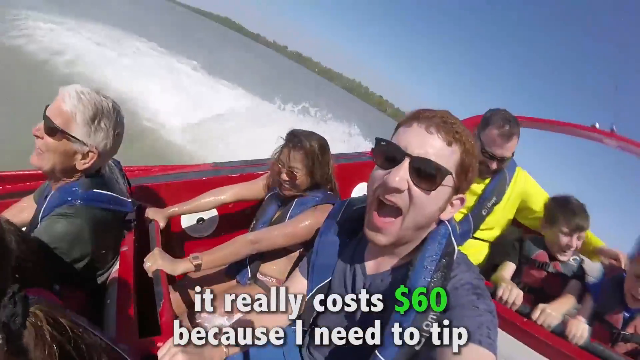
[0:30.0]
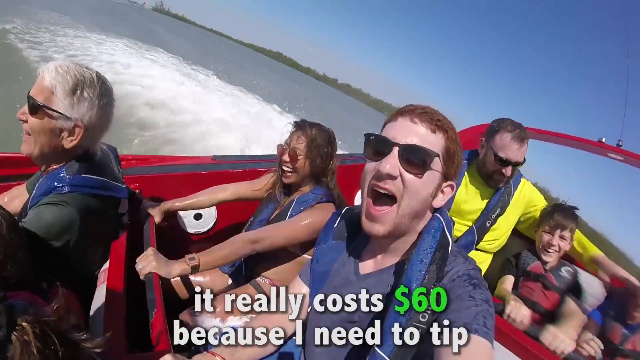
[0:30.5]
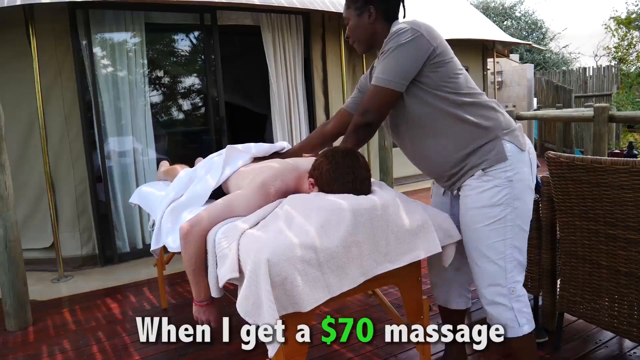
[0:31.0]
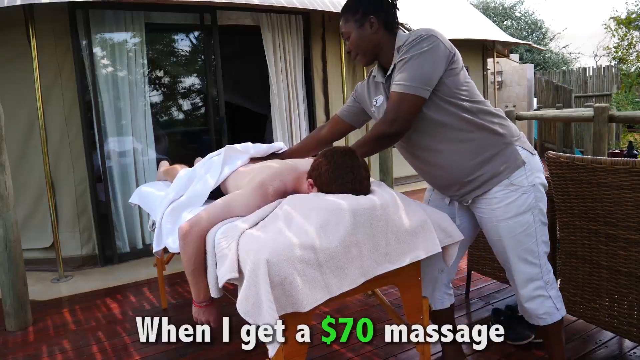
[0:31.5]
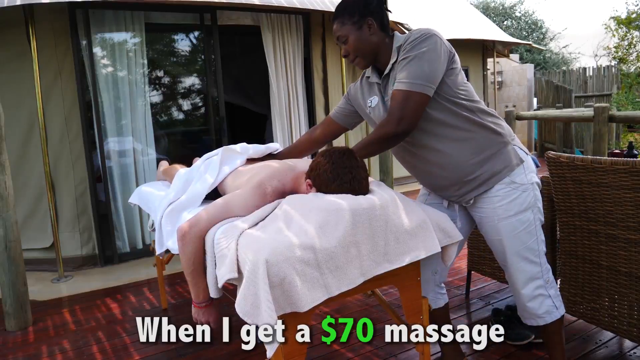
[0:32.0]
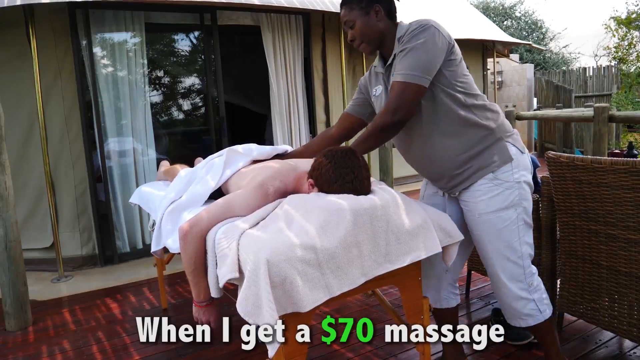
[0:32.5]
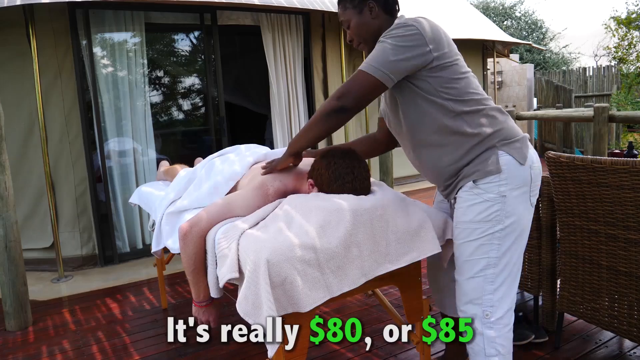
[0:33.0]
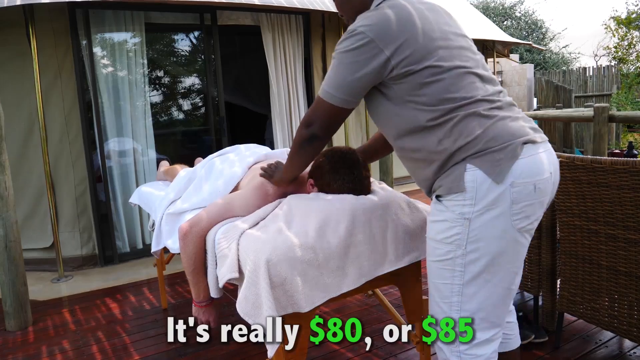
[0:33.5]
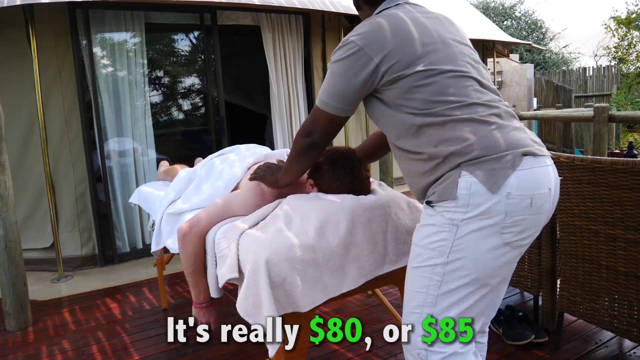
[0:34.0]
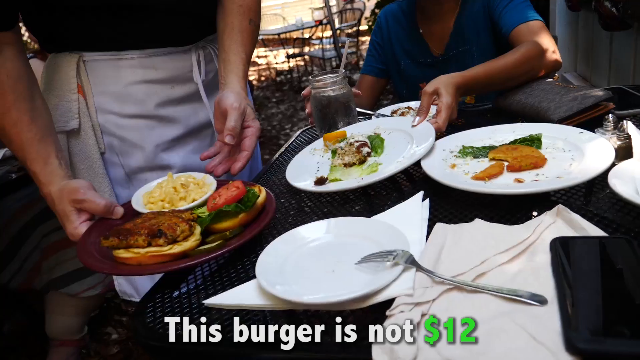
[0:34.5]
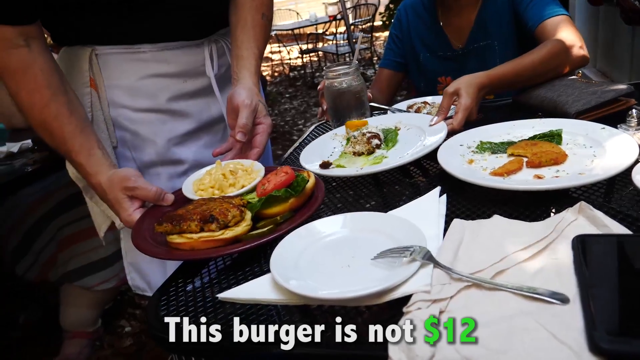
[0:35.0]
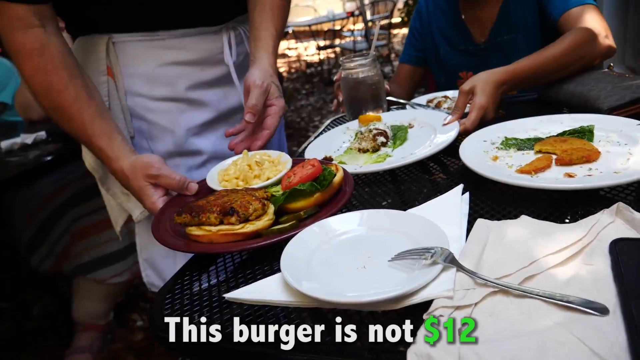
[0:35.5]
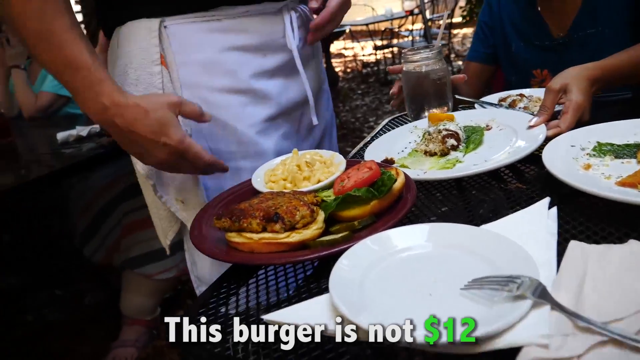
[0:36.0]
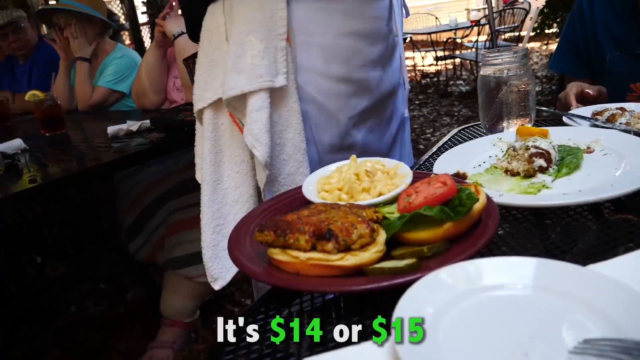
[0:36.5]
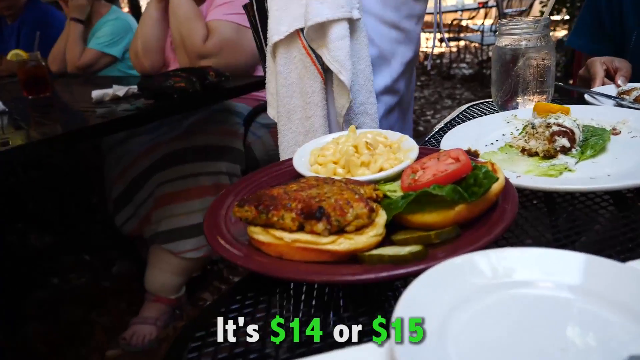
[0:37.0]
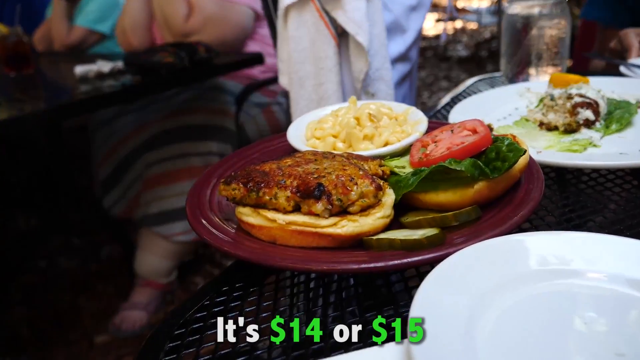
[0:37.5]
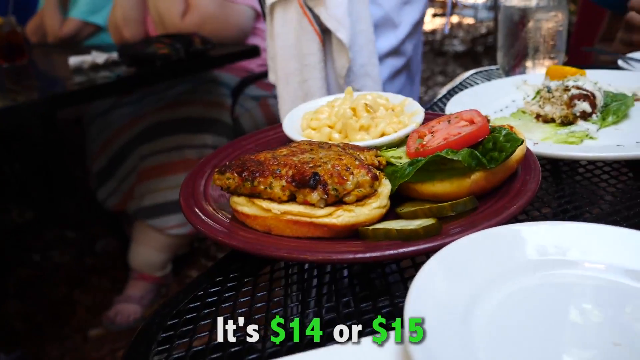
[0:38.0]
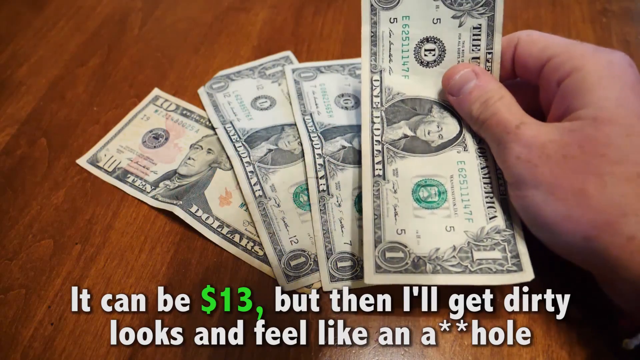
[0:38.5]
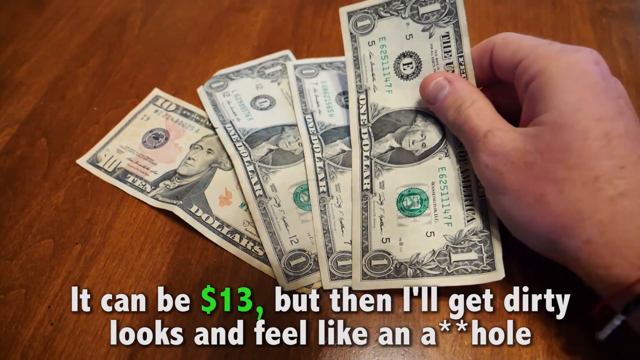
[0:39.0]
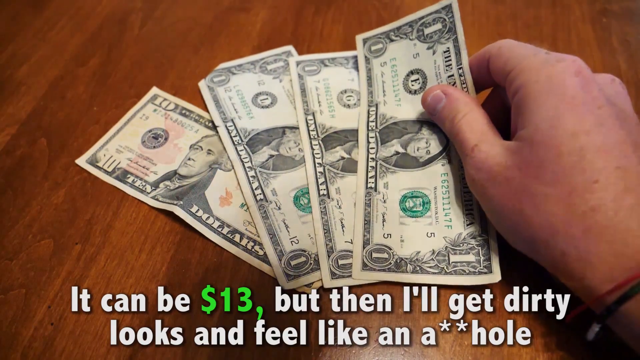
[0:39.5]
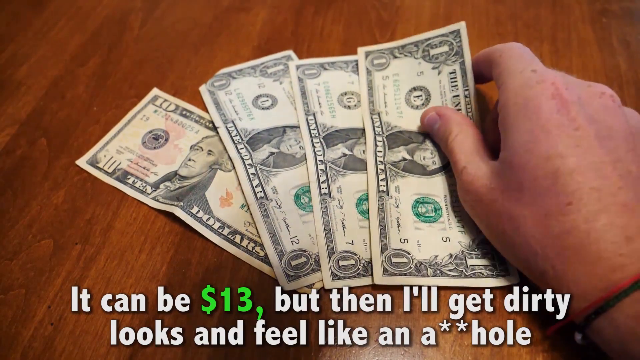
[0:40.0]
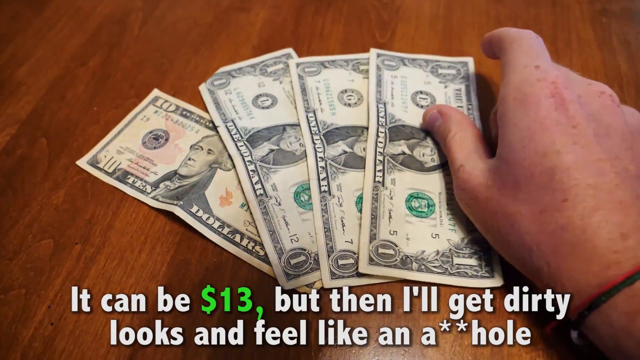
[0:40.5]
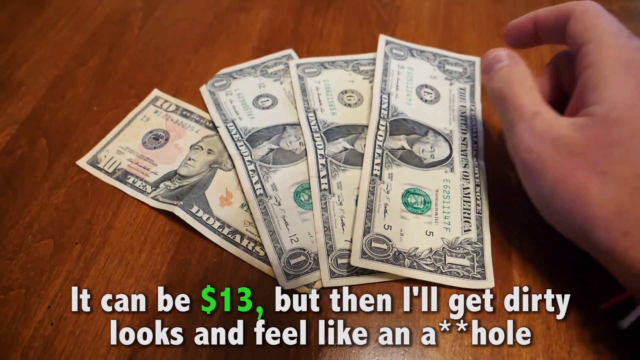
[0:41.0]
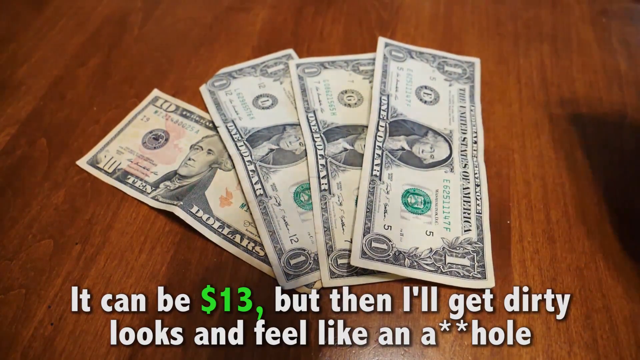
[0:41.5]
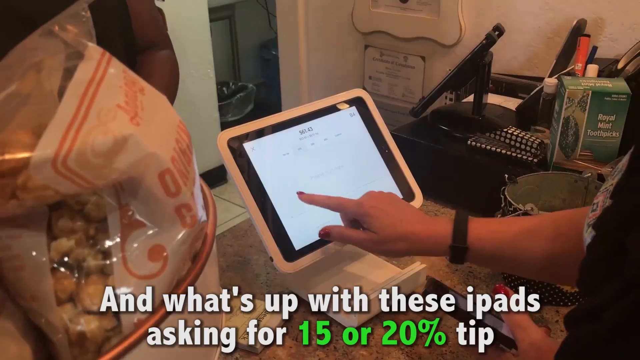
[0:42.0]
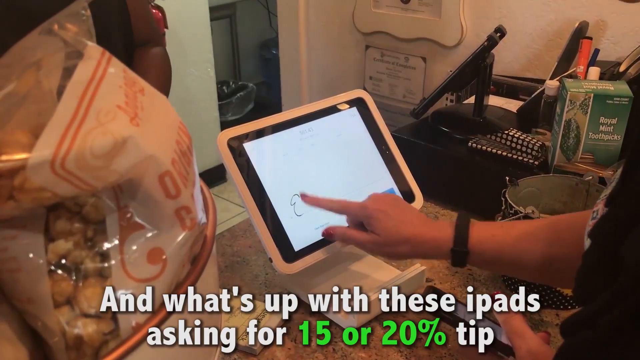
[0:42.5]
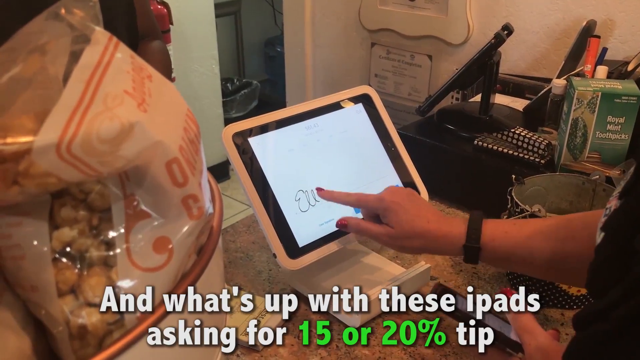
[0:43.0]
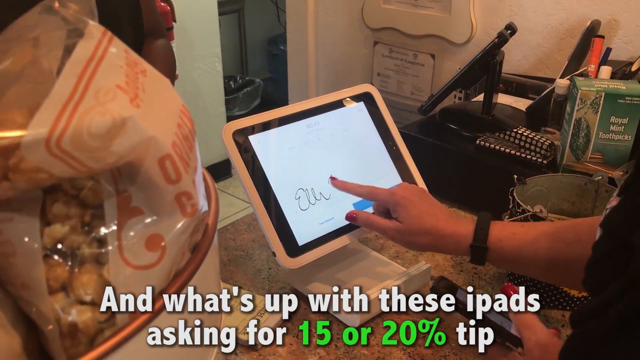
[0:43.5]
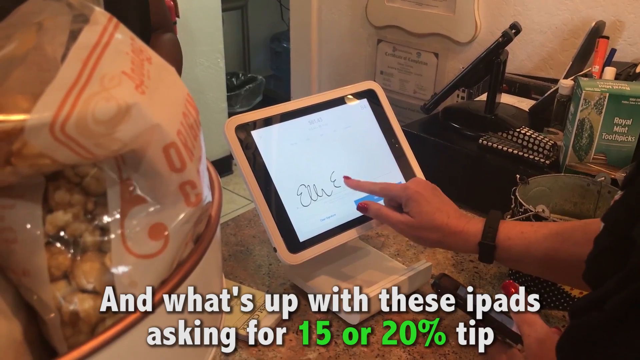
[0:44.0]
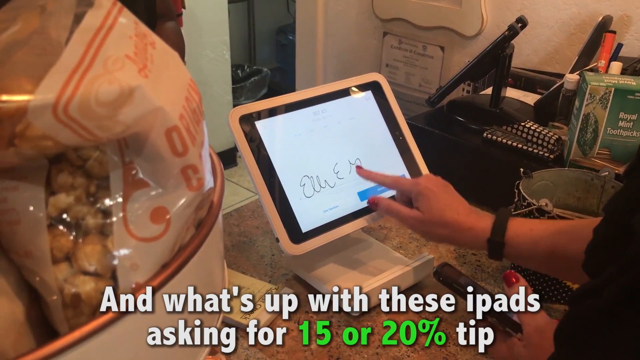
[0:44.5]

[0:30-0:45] On the boat, the shot is zoomed in close to the man's face. He wears sunglasses and a purplish shirt and appears to be yelling as the boat moves. Other people are in the background, including a person in a yellow shirt, which may indicate some kind of safety role or authority on the boat. The video zooms out to the next scene: the man lies face down with no clothes on, on a massage table on top of a white sheet with a white towel above him, while a lady in a gray shirt and white pants gives him a massage, apparently on a patio in front of a window. Next is a close-up of a black table with a lattice-like pattern and plates of food, appearing to include many different things, among them some sort of sandwich or burger with macaroni and cheese or a similar food in the background; the many plates and foods are hard to distinguish. A person in a blue shirt is at the table, her face not visible. It then zooms out to another scene of a wooden table with $13 on it: a $10 bill and three singles. Next, an iPad serves as a cash register and a person signs their name as if paying the bill.